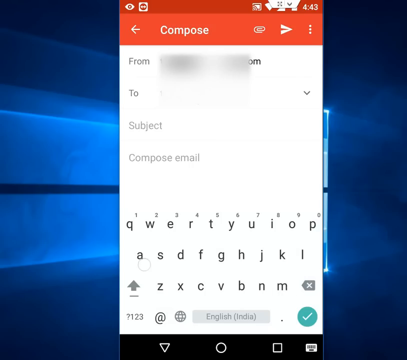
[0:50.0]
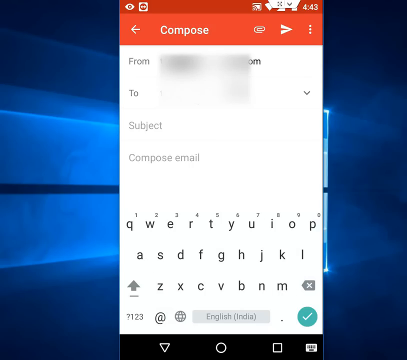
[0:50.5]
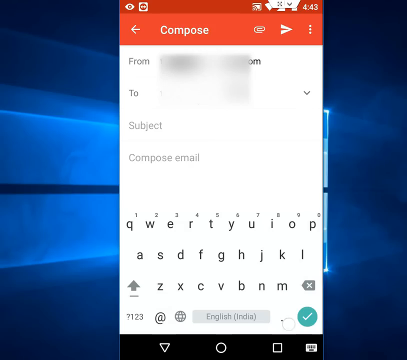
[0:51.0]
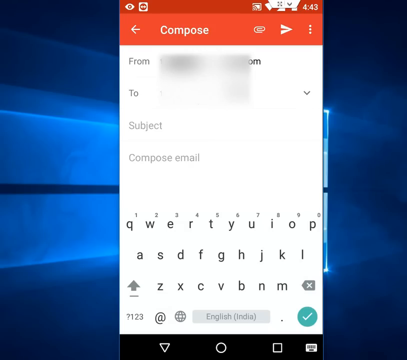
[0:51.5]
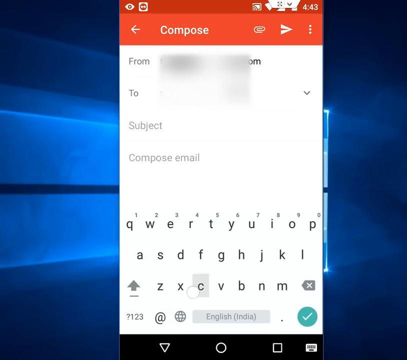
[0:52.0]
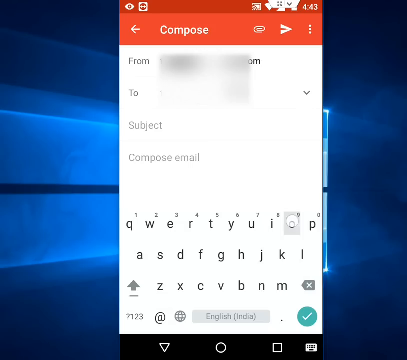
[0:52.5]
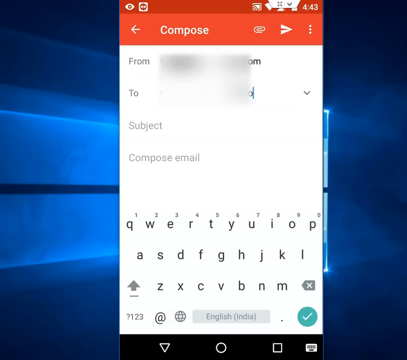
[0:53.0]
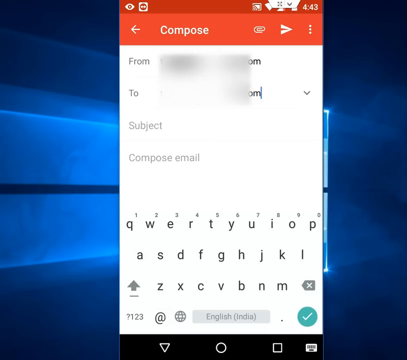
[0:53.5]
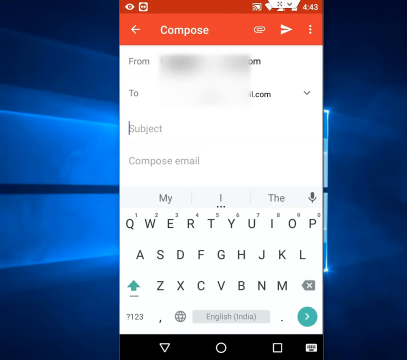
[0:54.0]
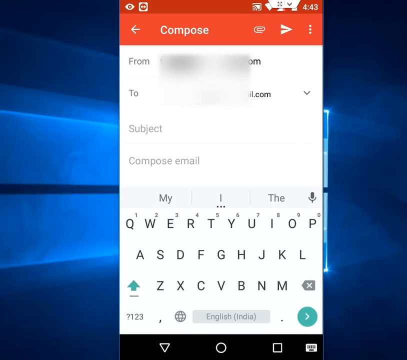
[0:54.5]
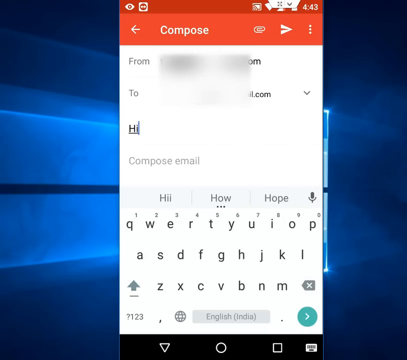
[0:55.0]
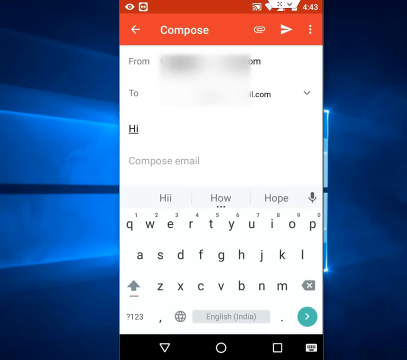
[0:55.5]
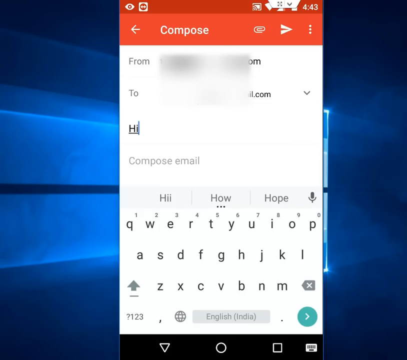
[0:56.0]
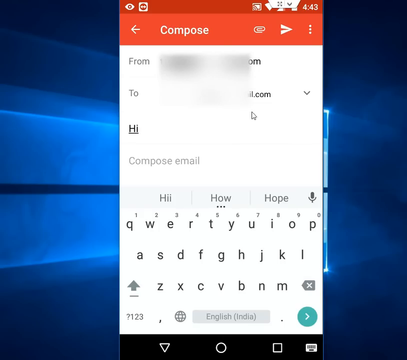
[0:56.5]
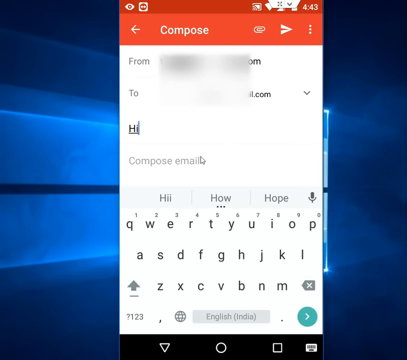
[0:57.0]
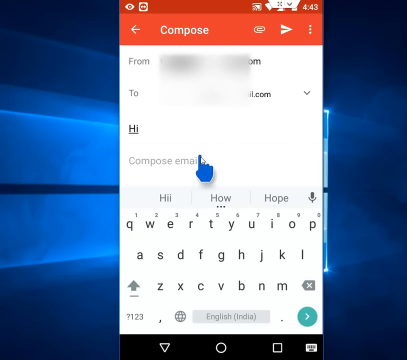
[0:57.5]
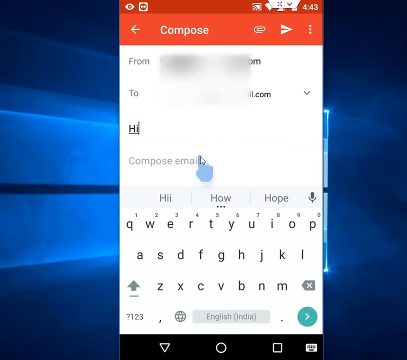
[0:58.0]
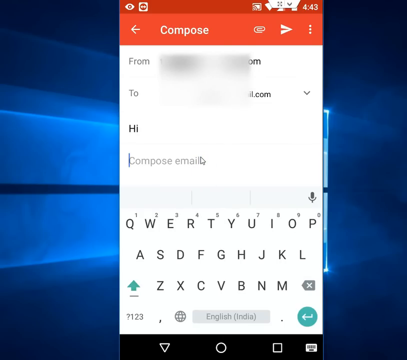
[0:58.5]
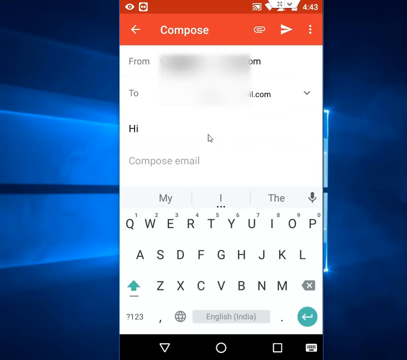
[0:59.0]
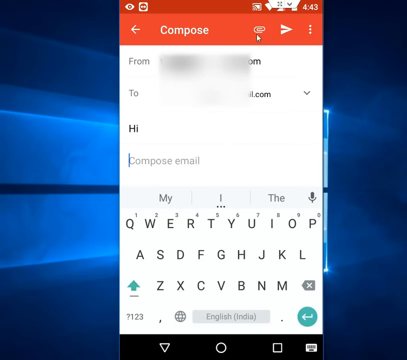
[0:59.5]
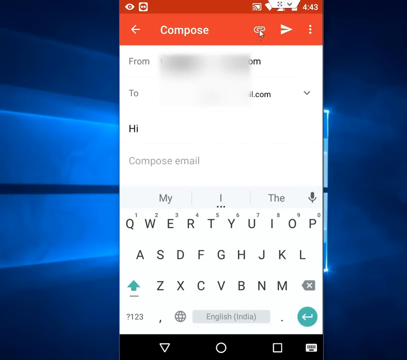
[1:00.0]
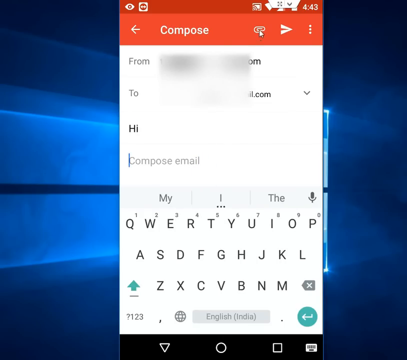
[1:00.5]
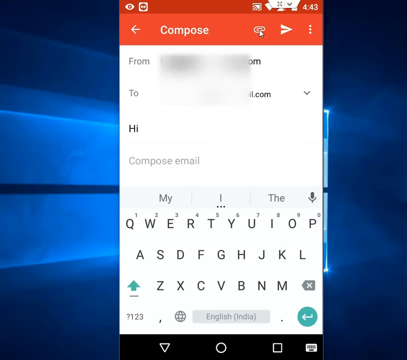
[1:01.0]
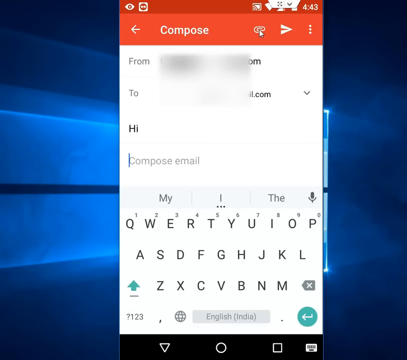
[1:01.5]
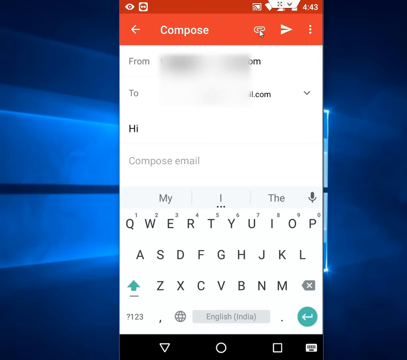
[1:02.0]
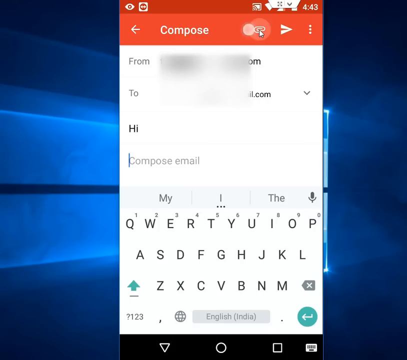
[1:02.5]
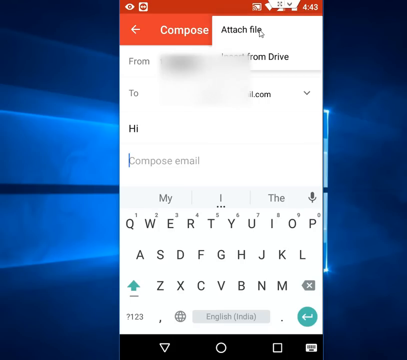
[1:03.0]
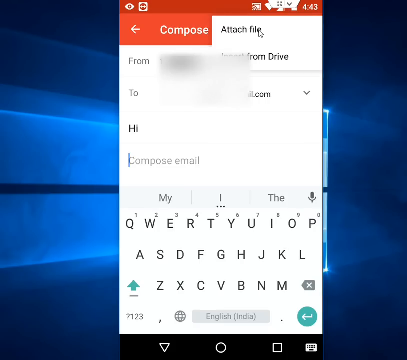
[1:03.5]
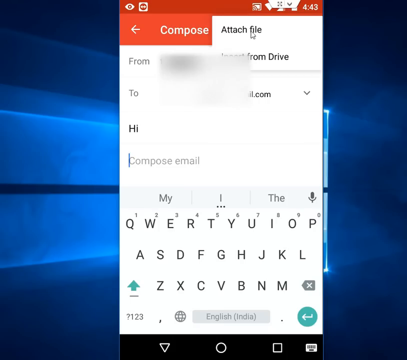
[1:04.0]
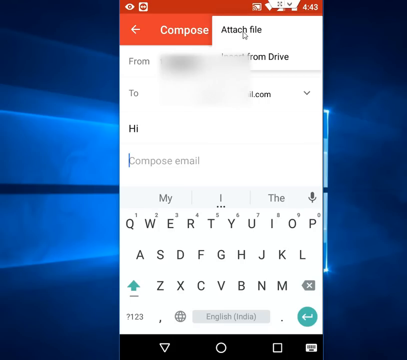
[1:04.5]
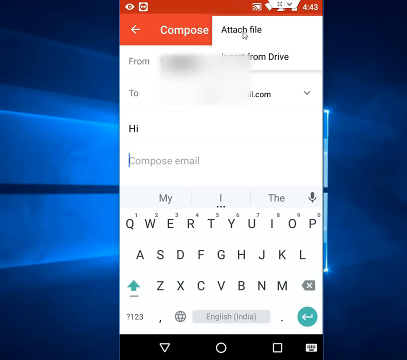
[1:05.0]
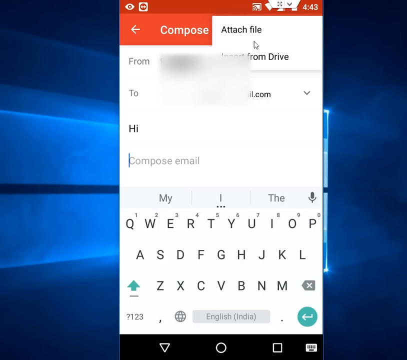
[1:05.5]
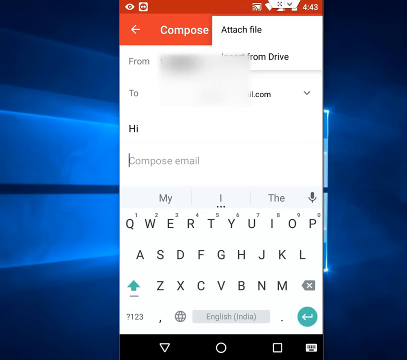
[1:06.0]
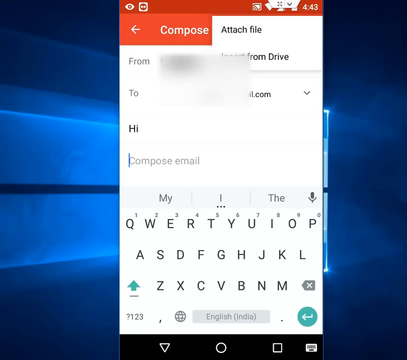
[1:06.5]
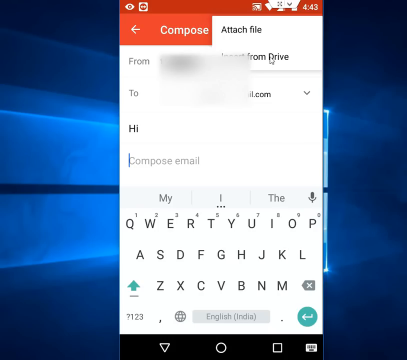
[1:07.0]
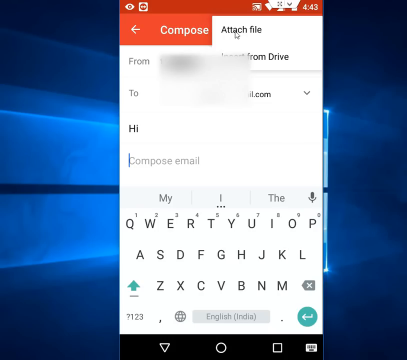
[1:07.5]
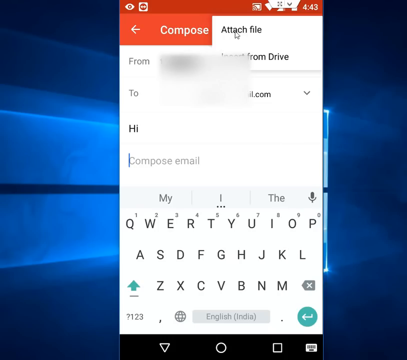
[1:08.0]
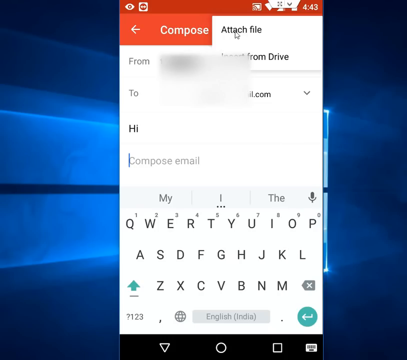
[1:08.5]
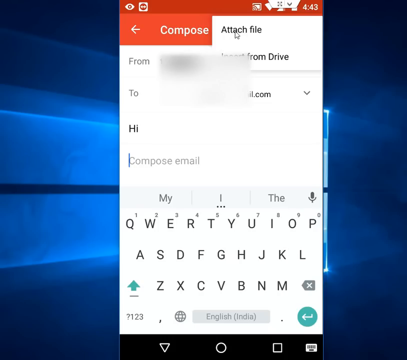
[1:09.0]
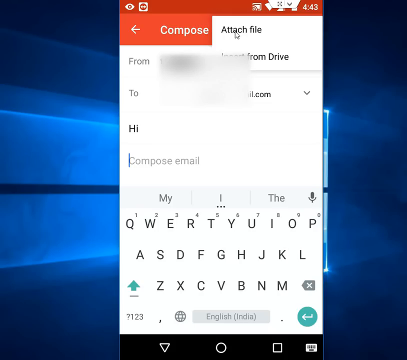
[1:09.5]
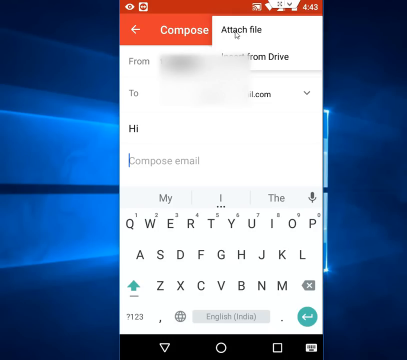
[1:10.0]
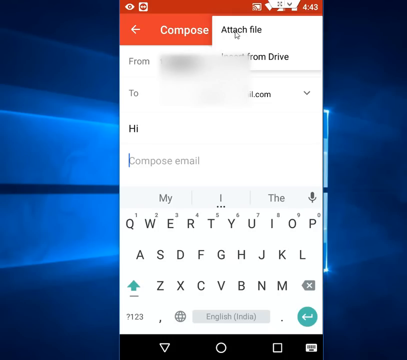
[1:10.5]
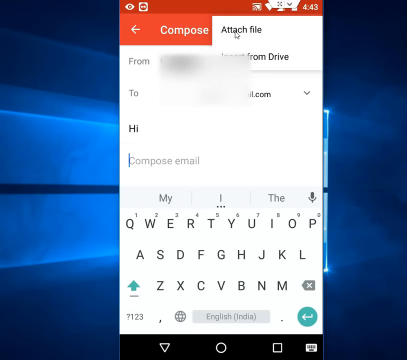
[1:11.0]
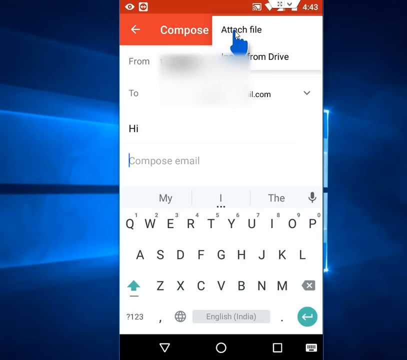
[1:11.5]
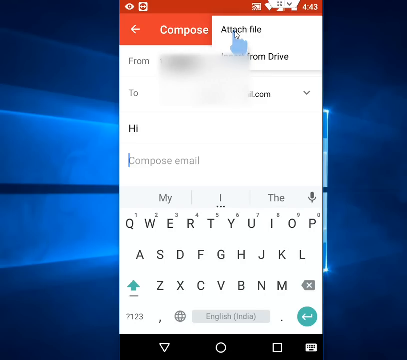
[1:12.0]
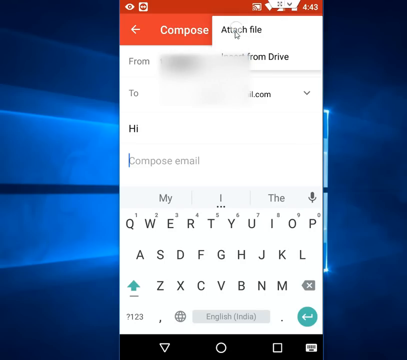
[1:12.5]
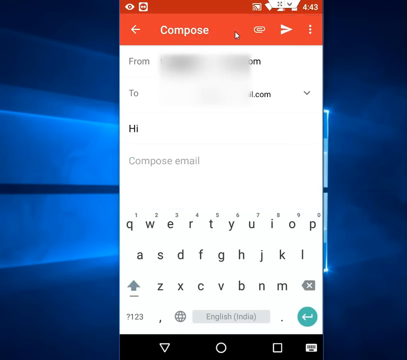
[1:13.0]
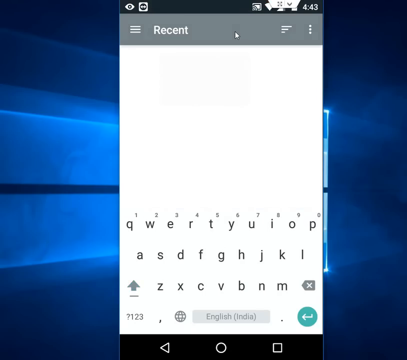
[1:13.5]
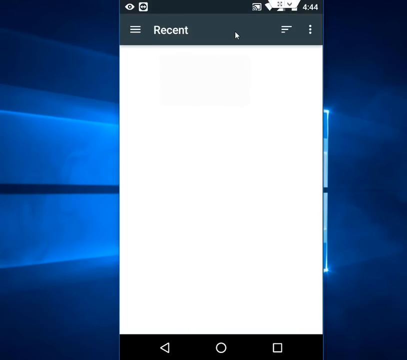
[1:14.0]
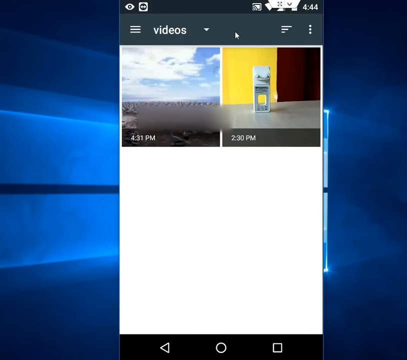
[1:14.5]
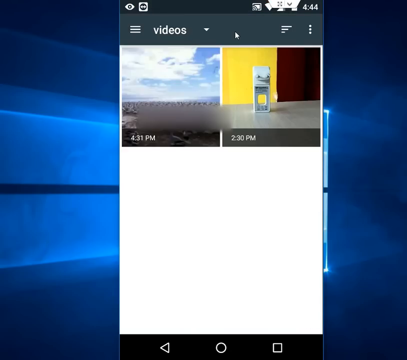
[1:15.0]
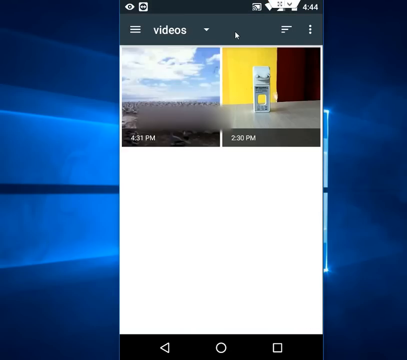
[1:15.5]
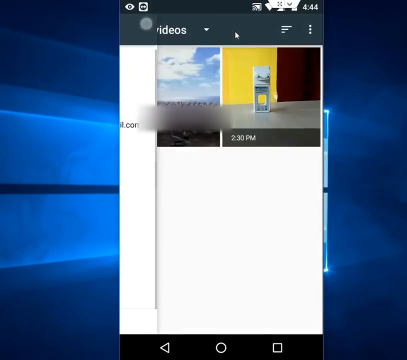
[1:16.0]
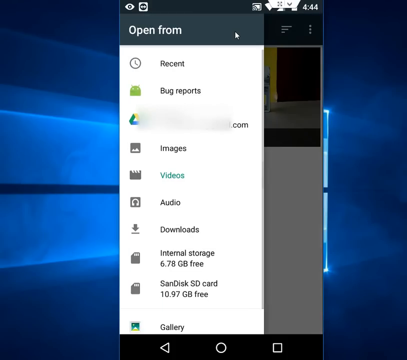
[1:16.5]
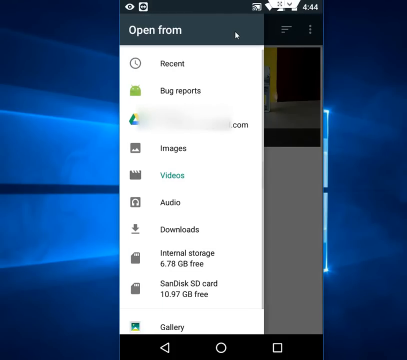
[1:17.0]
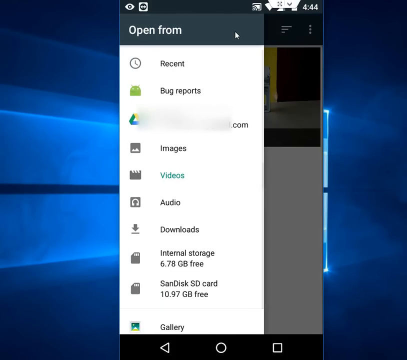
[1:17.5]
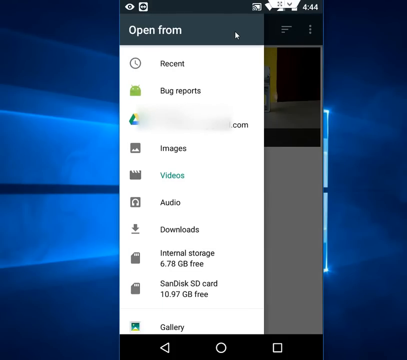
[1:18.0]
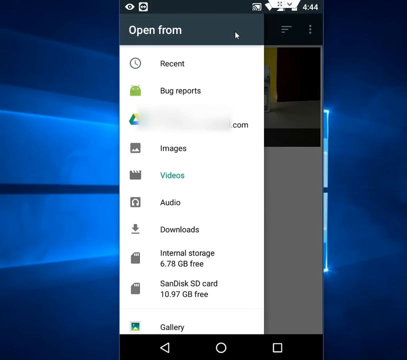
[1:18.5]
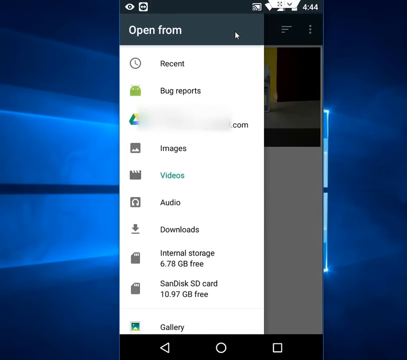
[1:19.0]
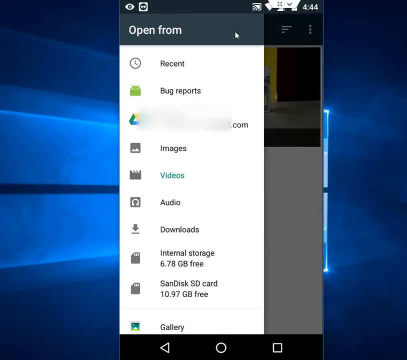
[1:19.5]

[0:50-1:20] The email compose screen is shown. The "from" field has been blurred out, and the "to" field is empty. Text ending in "il.com" is visible as a file is being attached. The subject appears to be the word "hi". The user goes to attach a file from the photos section. A QWERTY keyboard is used to type the email. At the top right of the screen an option reads "attach file from drive". When the file is being attached, videos of the ocean pop up, along with one of a chair with a yellow backdrop. The QWERTY keyboard has a white backdrop. In the lower left is an arrow pointing up, and on the right side of the third row is a gray box arrow with an X in the middle. At the bottom left are a question mark, "123", an at symbol, a globe, "English", dots, and a green star.